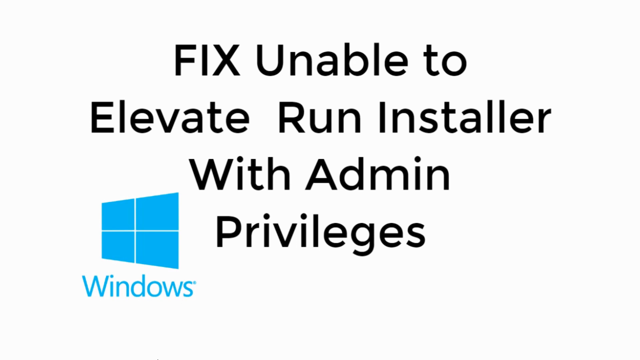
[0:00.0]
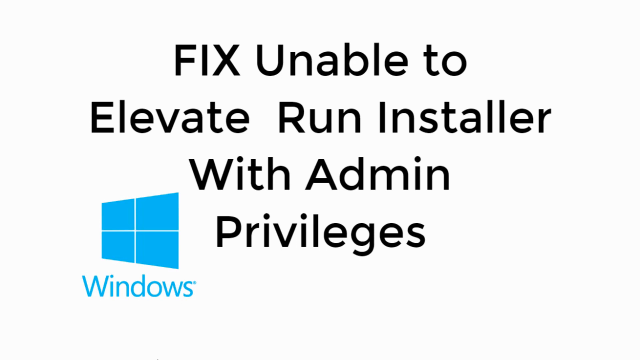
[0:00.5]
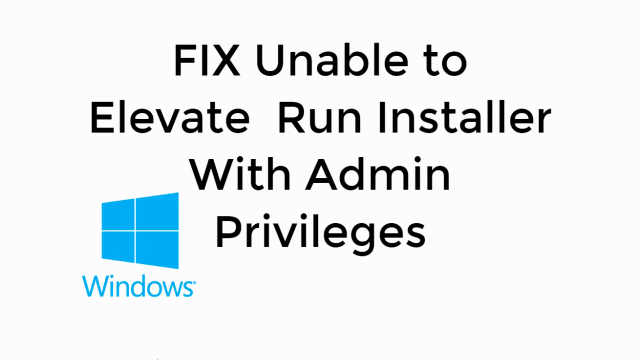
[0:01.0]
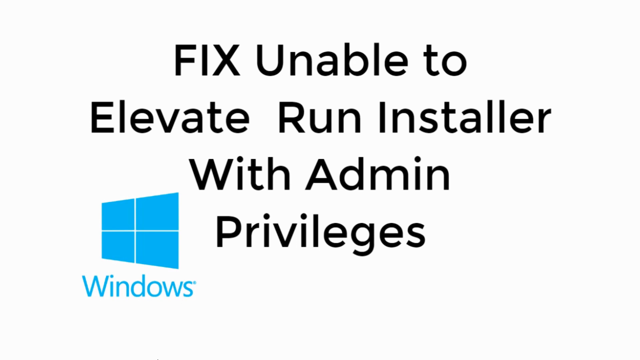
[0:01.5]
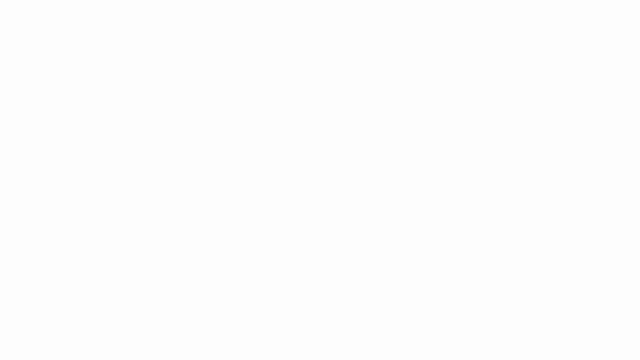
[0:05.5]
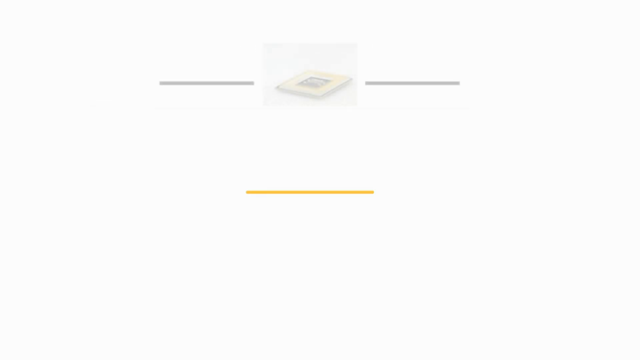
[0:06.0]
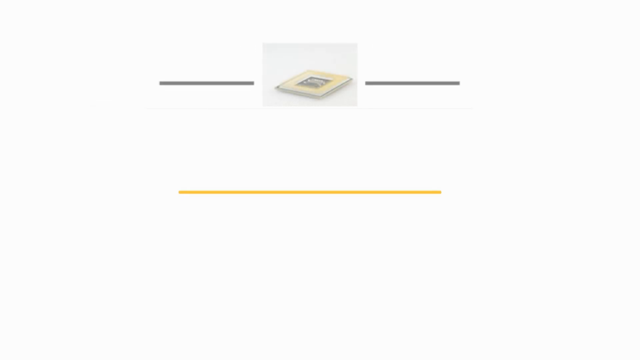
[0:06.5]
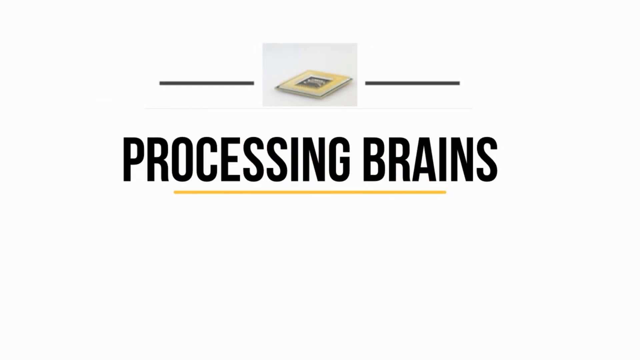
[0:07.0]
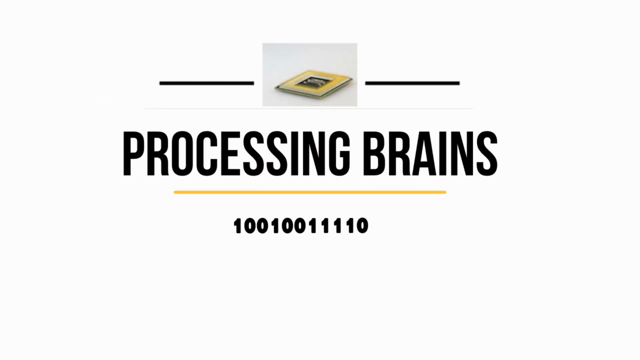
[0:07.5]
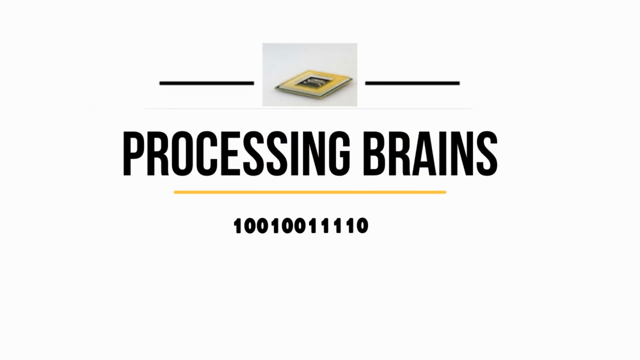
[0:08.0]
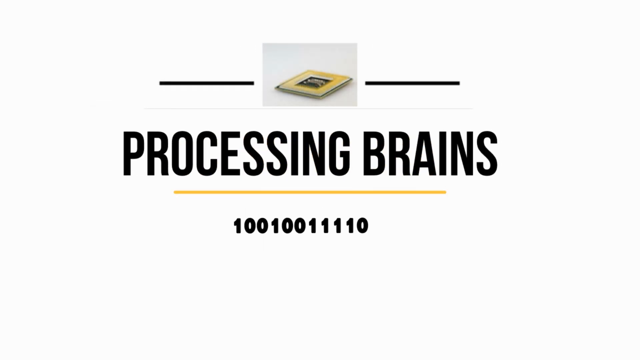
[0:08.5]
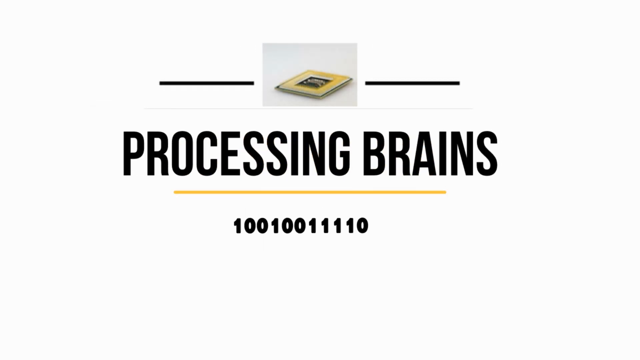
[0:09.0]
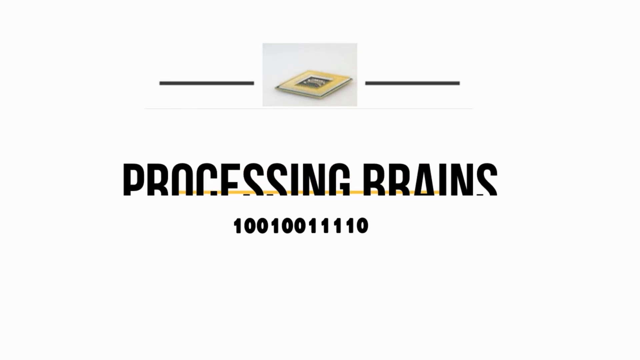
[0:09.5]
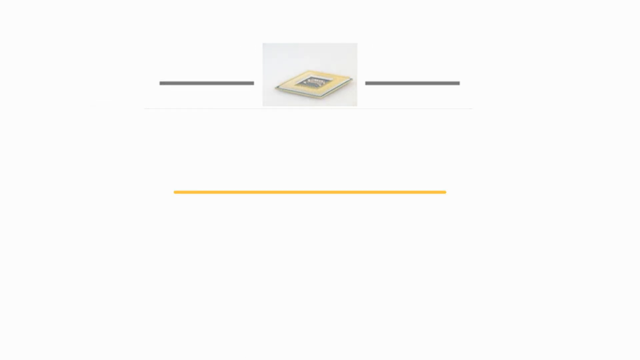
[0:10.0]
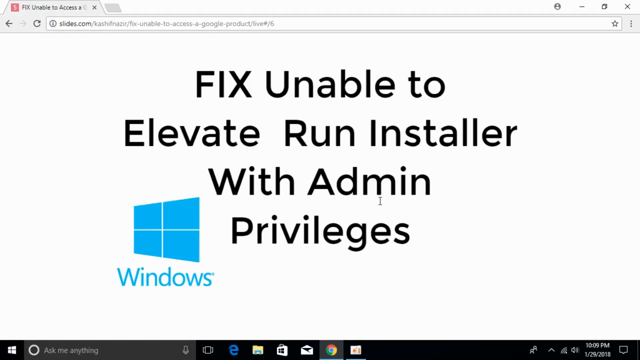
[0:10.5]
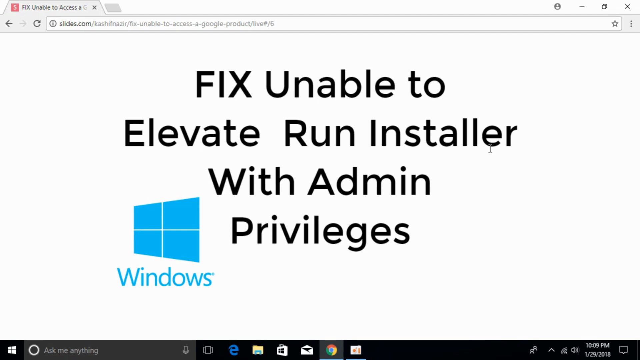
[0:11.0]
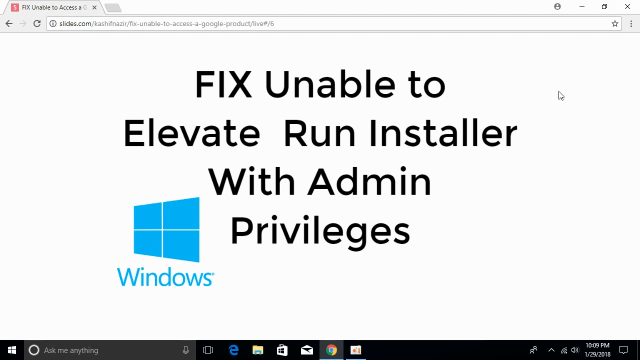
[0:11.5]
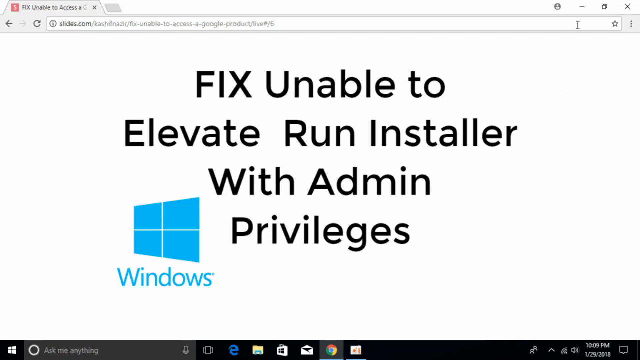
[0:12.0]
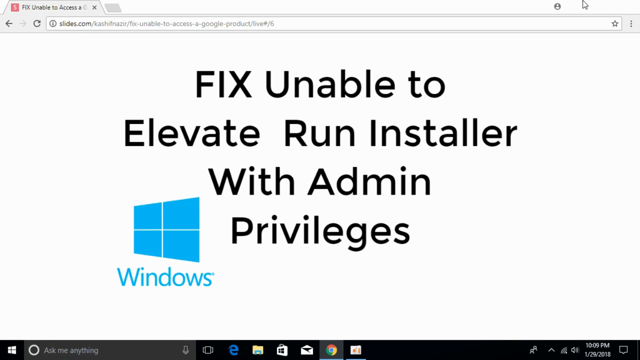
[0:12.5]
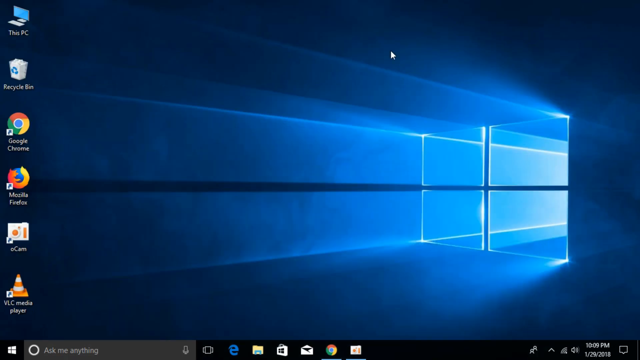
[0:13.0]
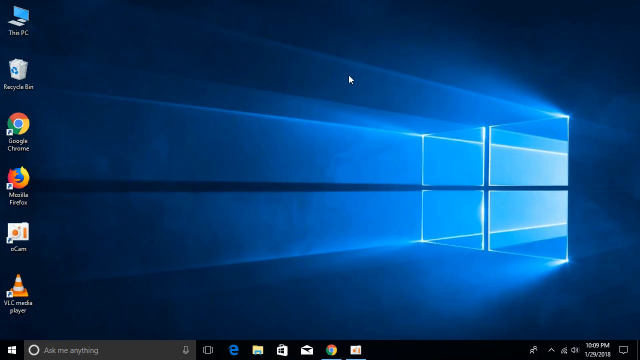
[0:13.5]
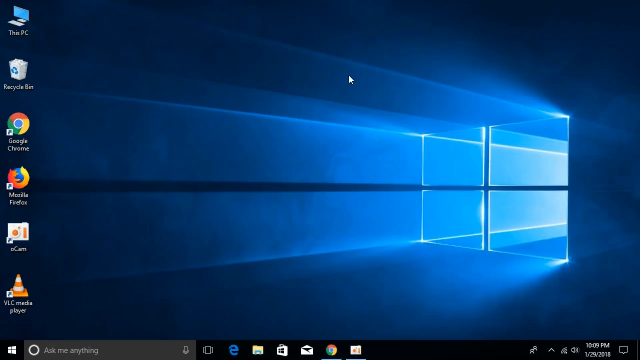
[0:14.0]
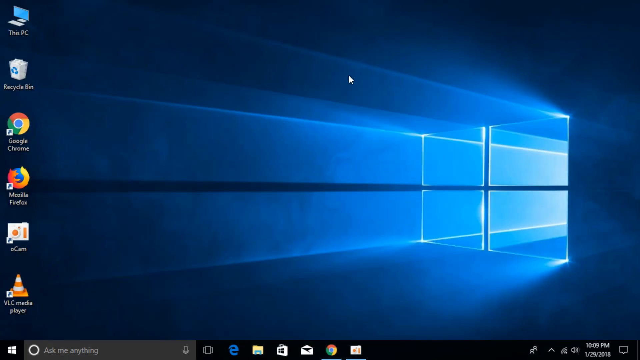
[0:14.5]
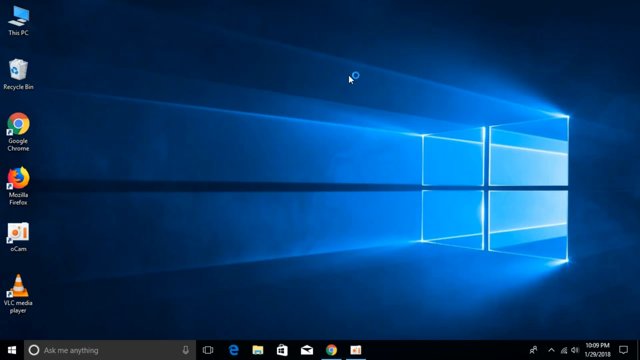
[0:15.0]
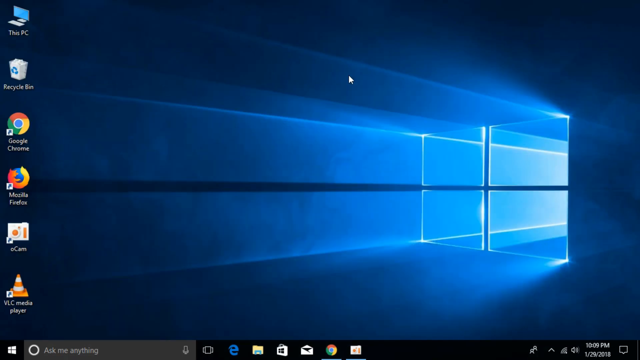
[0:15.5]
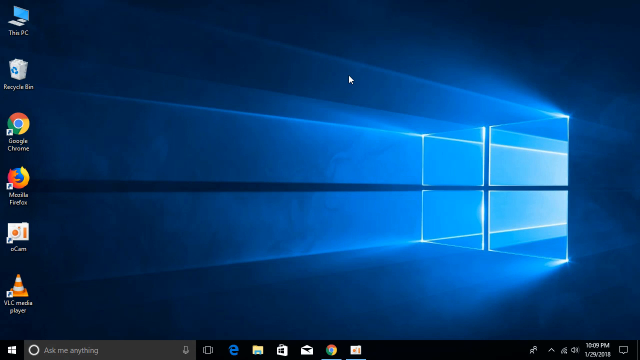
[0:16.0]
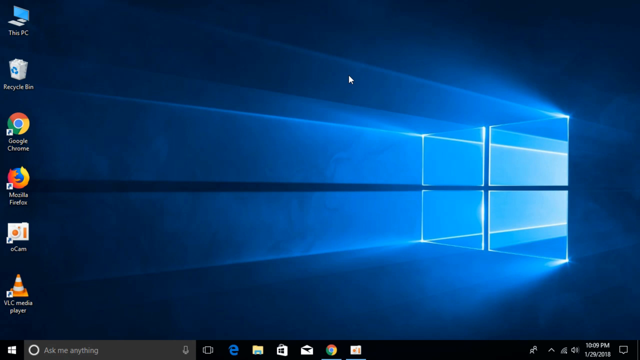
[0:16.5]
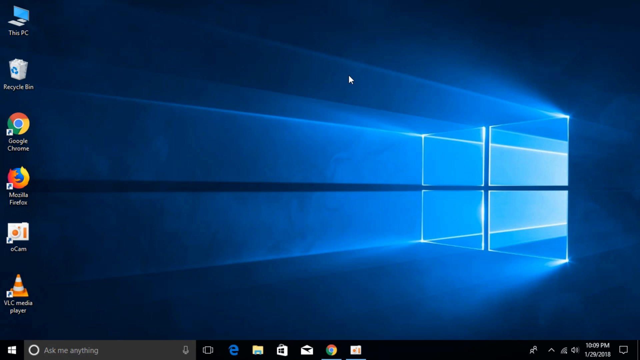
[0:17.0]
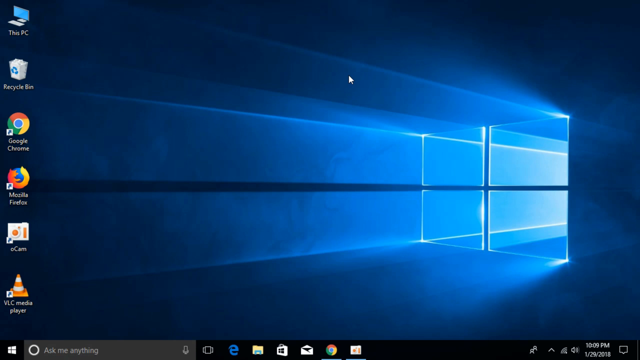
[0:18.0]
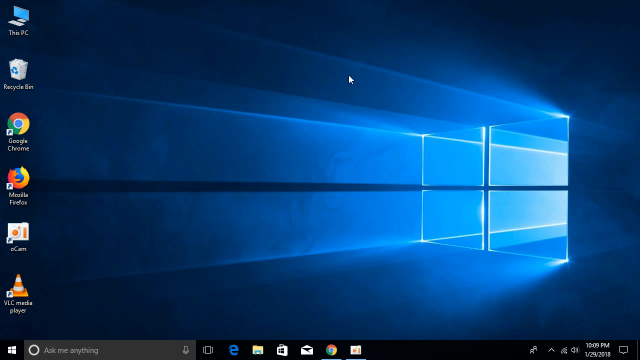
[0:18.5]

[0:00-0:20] The video is about fixing an "unable to elevate, run installer" problem in Windows, with text explaining how it can be fixed. Something like a sign appears at the top.